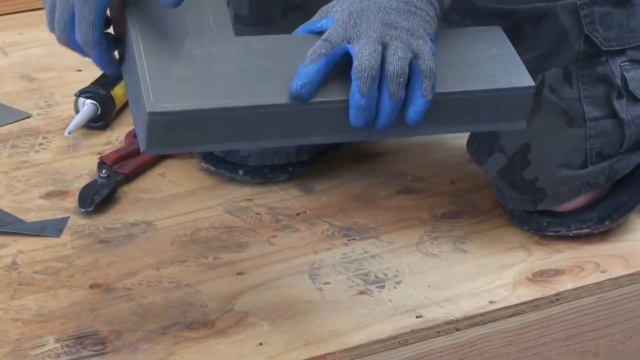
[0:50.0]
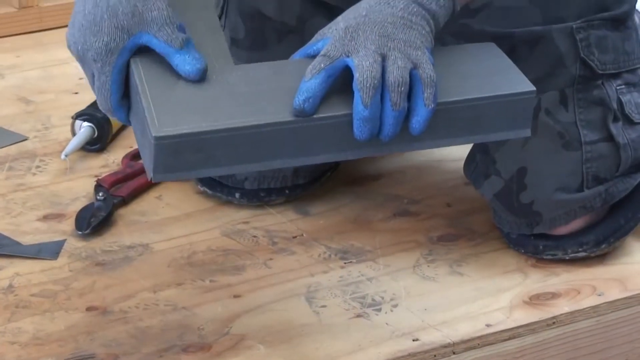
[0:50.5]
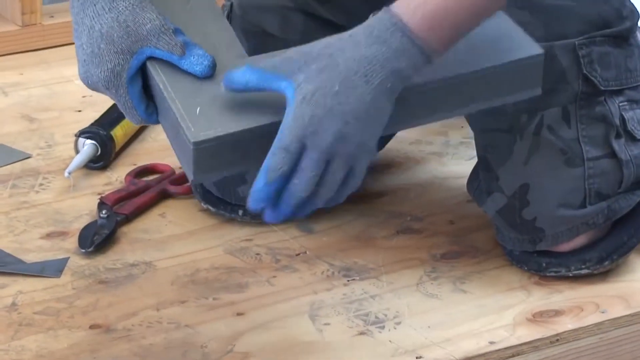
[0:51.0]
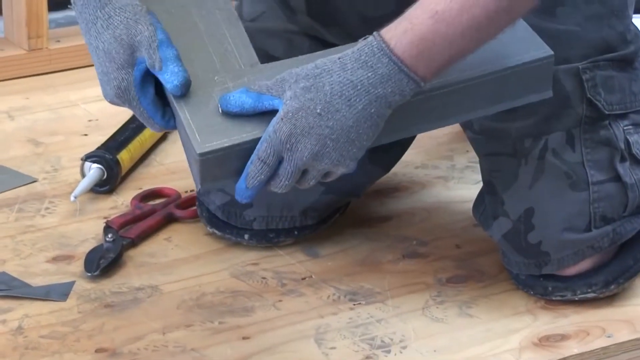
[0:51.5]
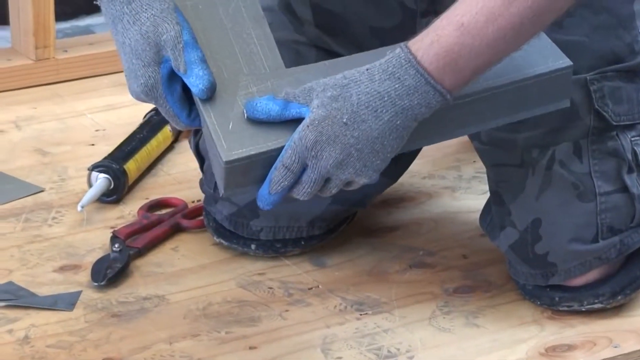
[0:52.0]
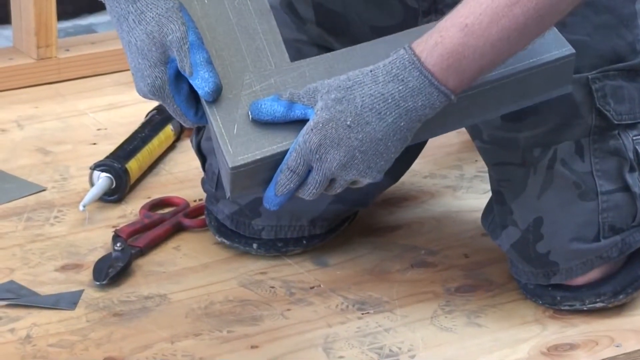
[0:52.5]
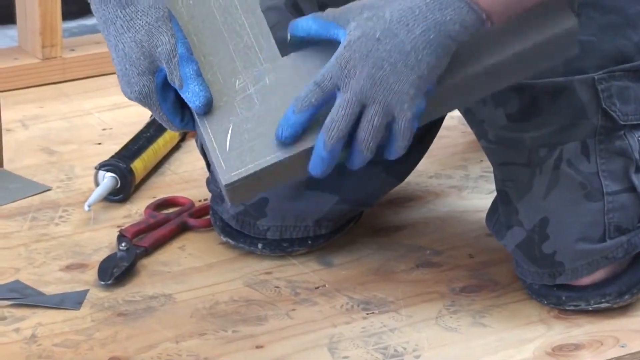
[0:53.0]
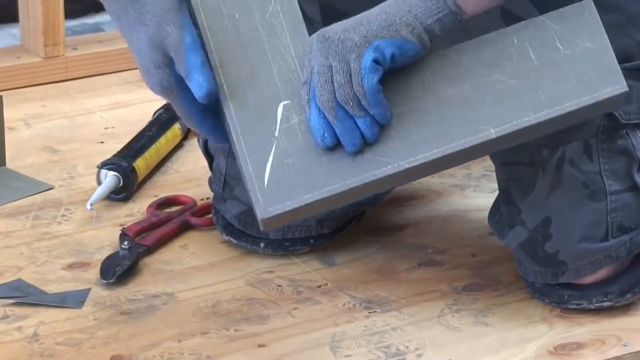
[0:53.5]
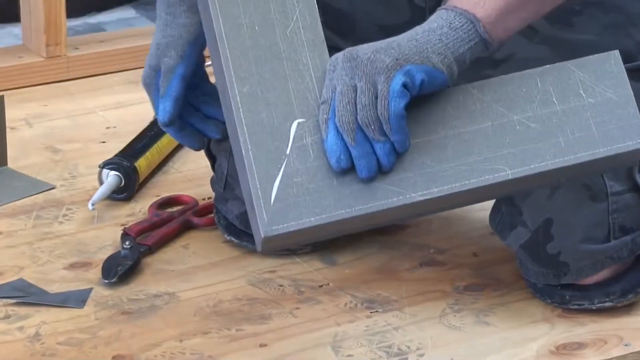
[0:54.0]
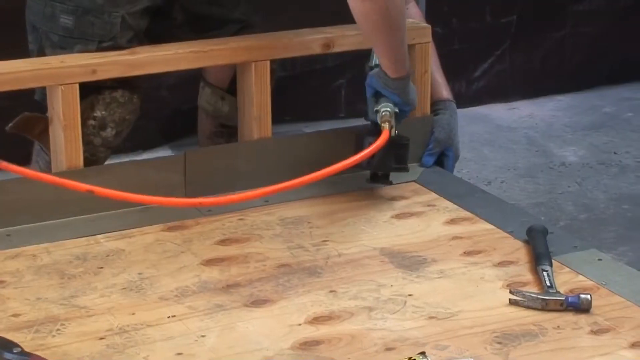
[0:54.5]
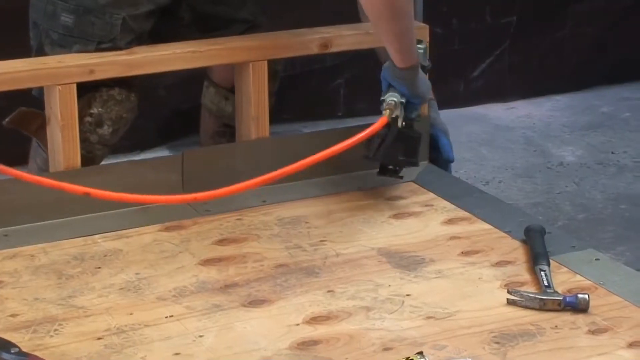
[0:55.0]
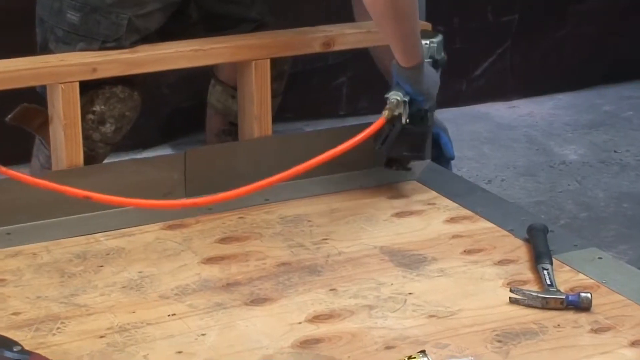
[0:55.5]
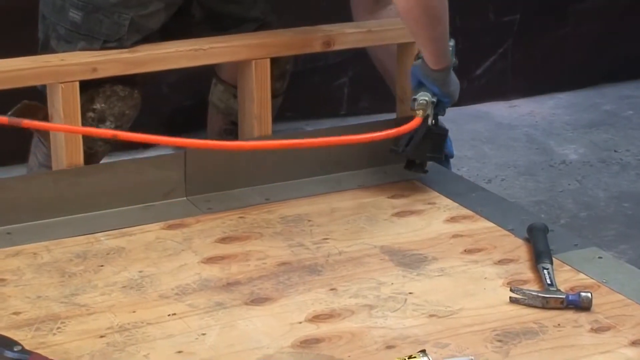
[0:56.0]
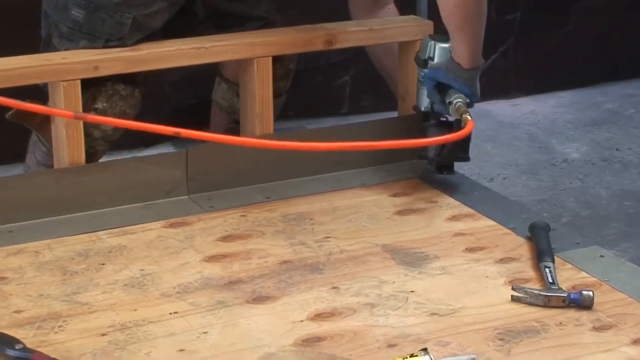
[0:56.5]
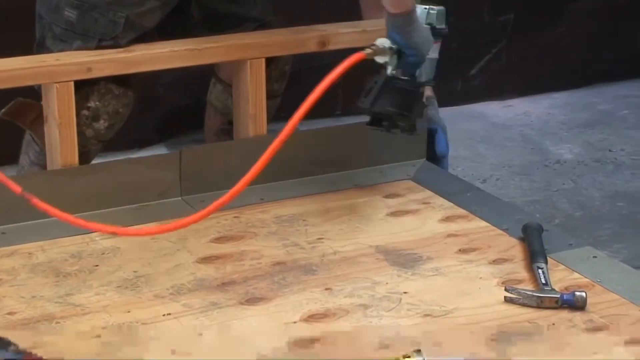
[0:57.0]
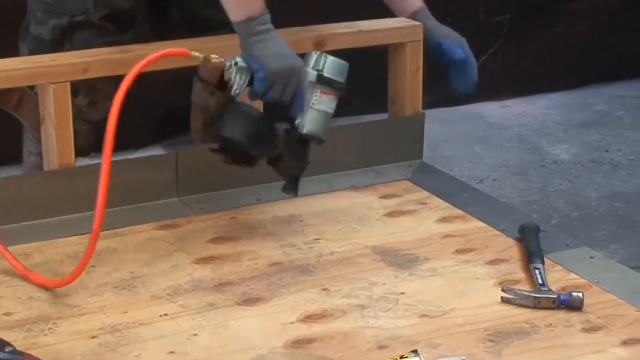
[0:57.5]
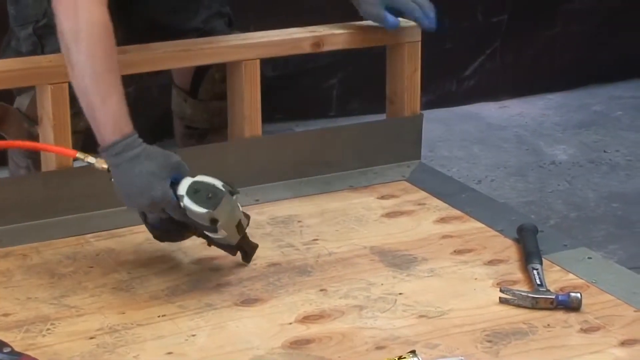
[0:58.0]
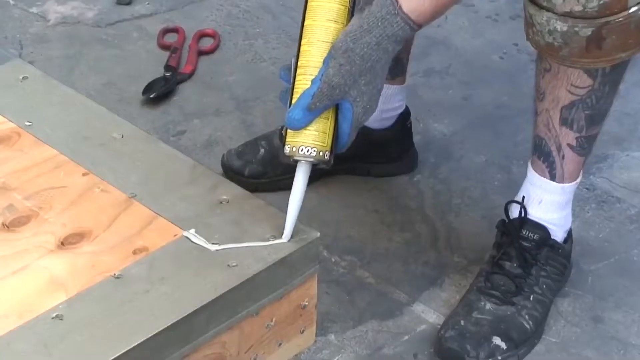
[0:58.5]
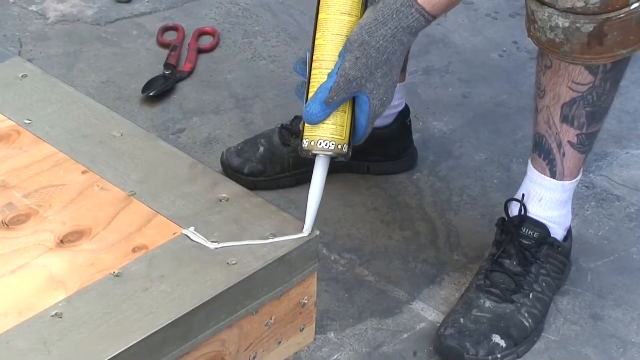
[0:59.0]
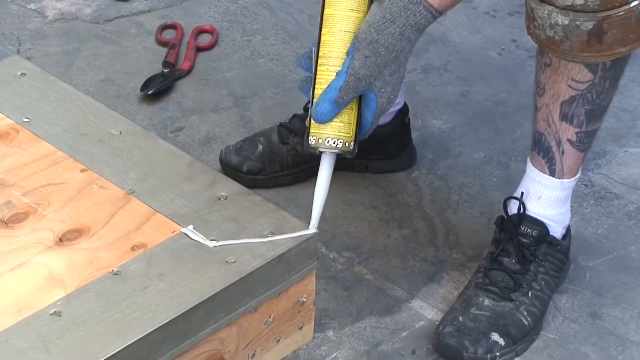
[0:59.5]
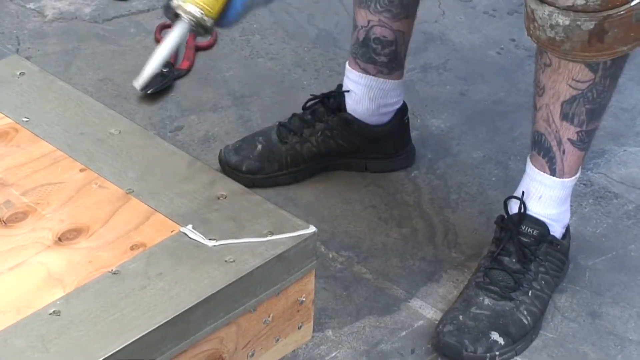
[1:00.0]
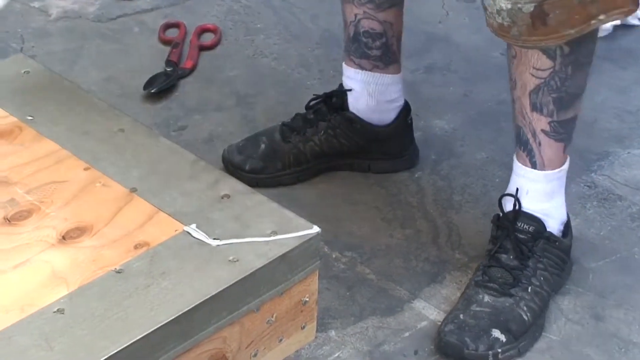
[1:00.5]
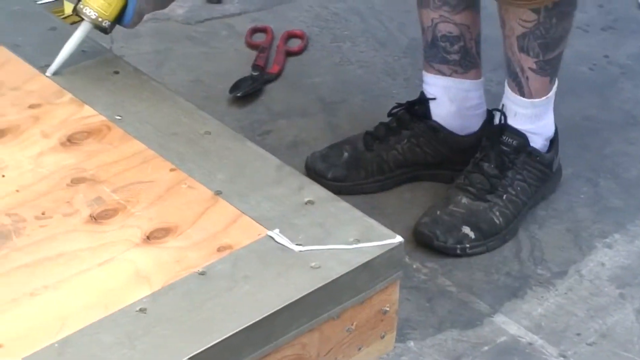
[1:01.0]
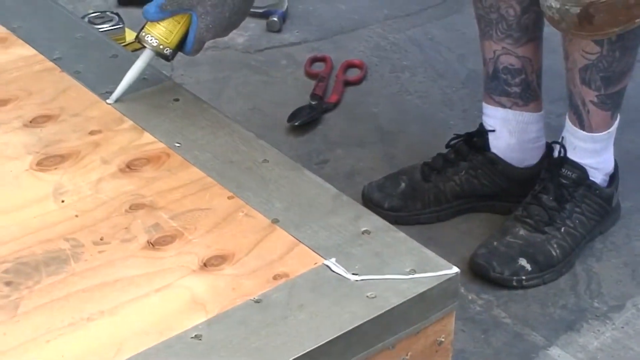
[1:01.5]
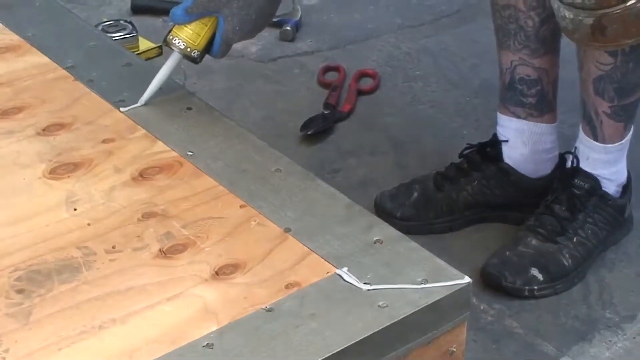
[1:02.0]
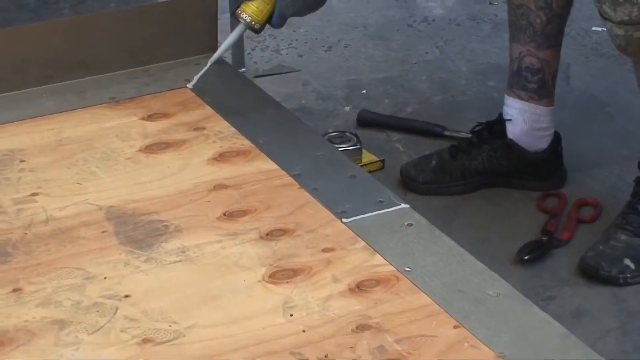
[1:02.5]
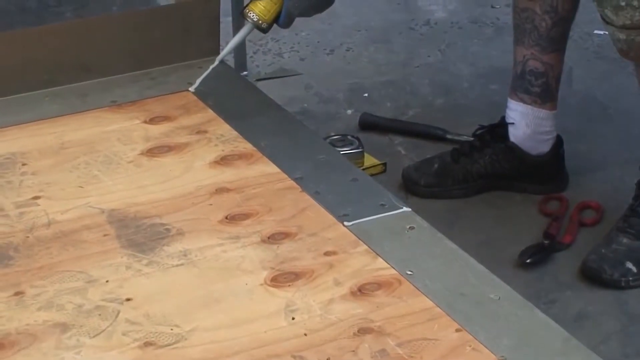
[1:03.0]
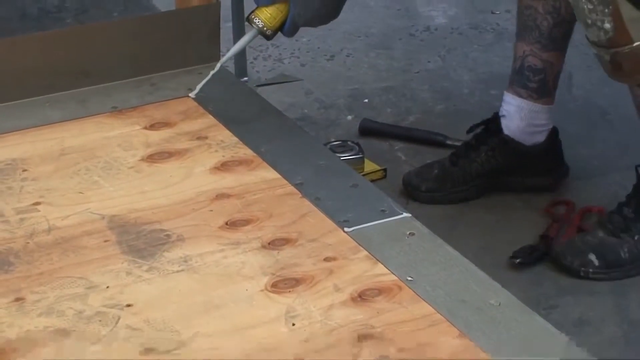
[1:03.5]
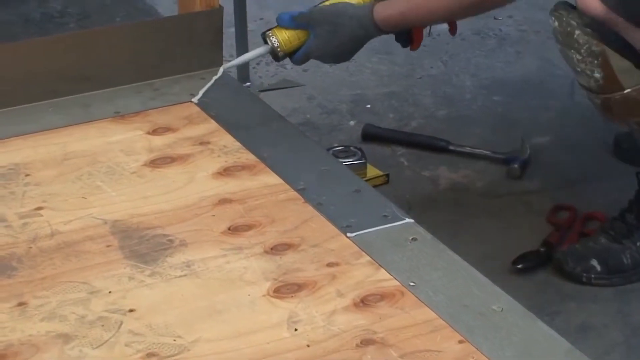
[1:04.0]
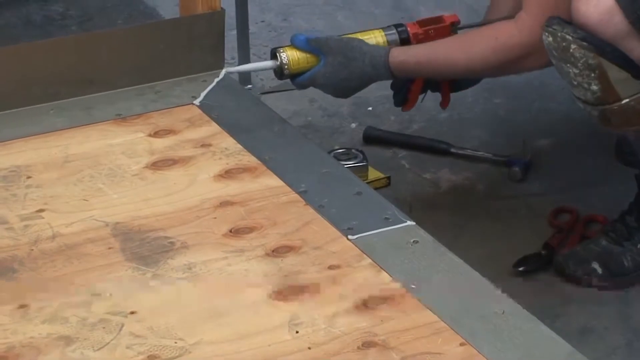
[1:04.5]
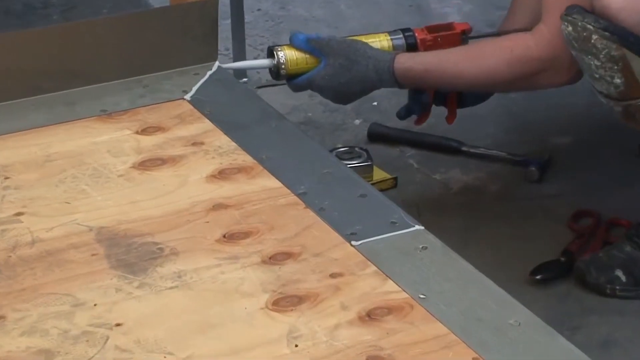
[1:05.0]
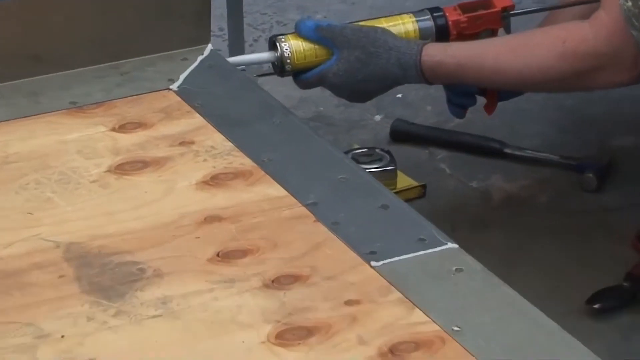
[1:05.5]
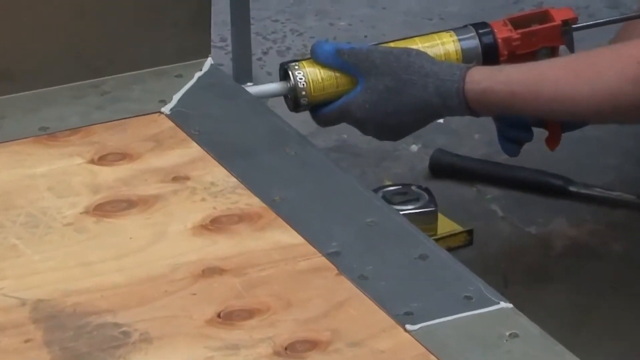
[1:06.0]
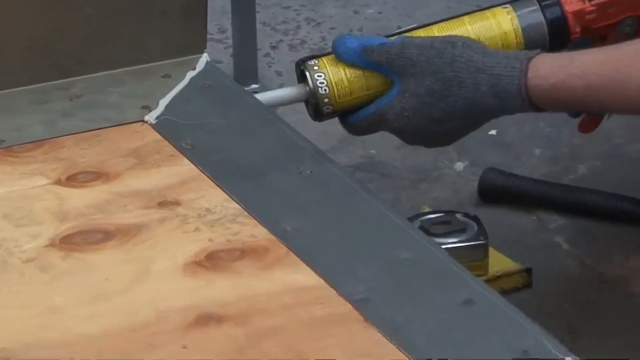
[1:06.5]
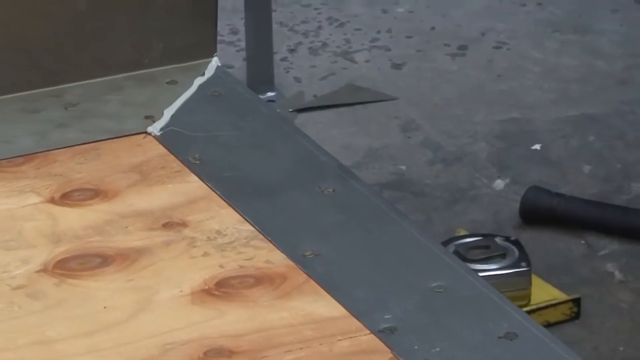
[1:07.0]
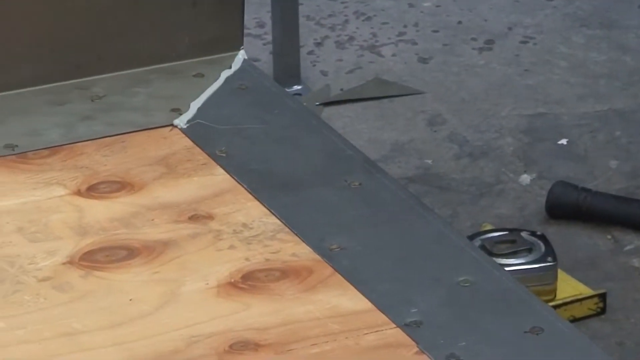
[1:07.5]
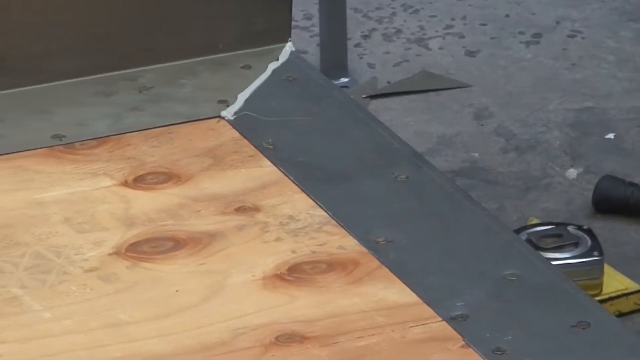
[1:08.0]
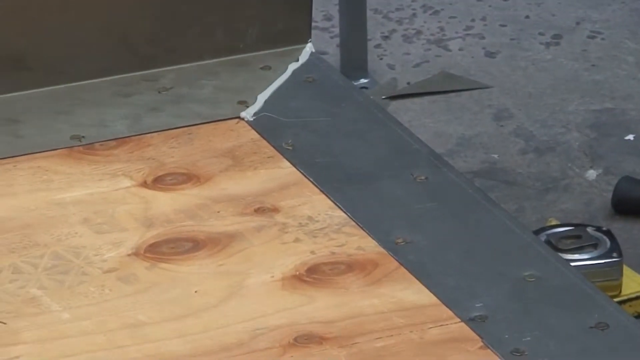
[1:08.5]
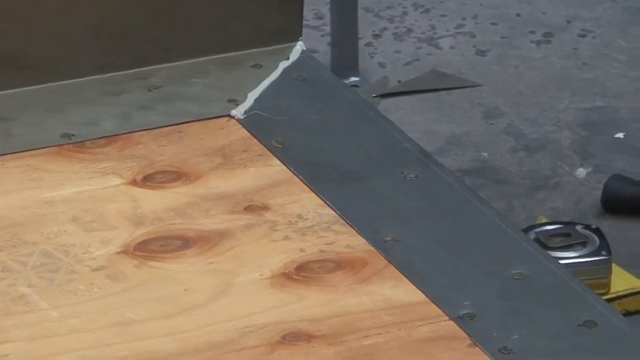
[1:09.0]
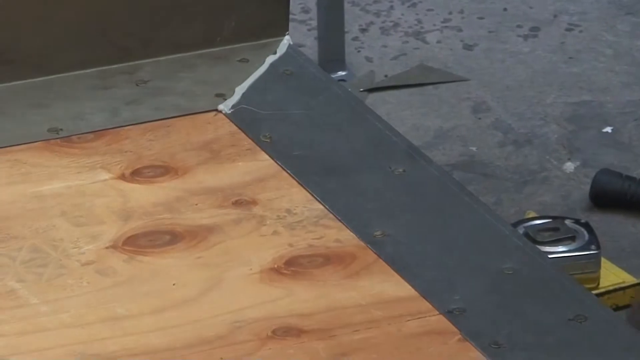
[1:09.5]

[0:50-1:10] He holds the pieces of the 90-degree join together, wearing work gloves. Next, he is behind the decking, standing and using a nail gun or some pneumatic tool with an orange tube behind it. In the front of the shot a hammer is laid on the decking, and the corner pieces are being nailed onto the wooden decking. Then a corner of a piece of the decking is shown, and he glues the corner using the glue syringe. In the background is a red pair of tin snips, and on the ground are his quite dirty black Nike trainers, his white socks, and his left ankle, which has tattoos on it. He glues the joins; there is a horizontal piece where the joins overlap, and he seals a line for each join. The camera zooms into the back right-hand corner of one of the joins, going at a 45-degree angle from the corner.